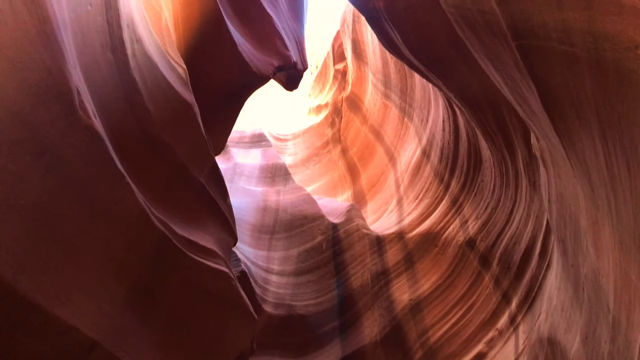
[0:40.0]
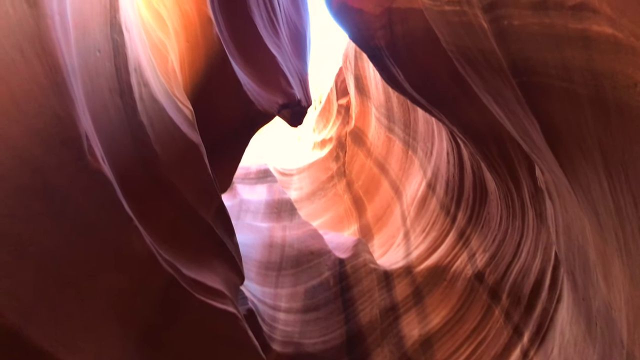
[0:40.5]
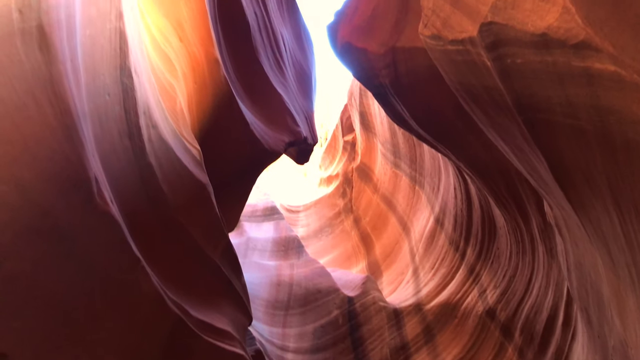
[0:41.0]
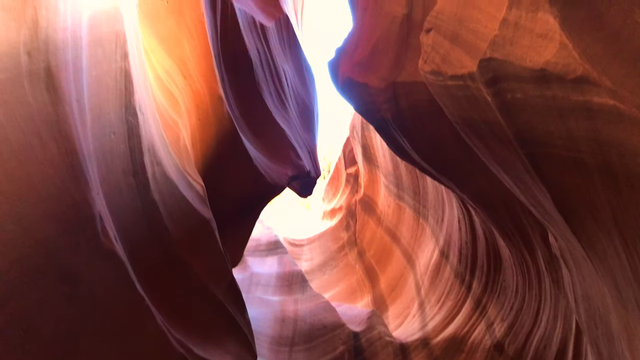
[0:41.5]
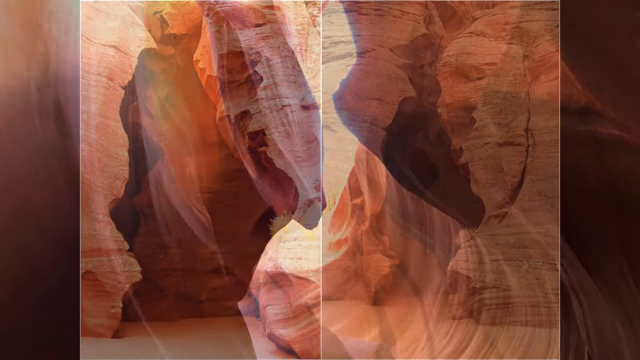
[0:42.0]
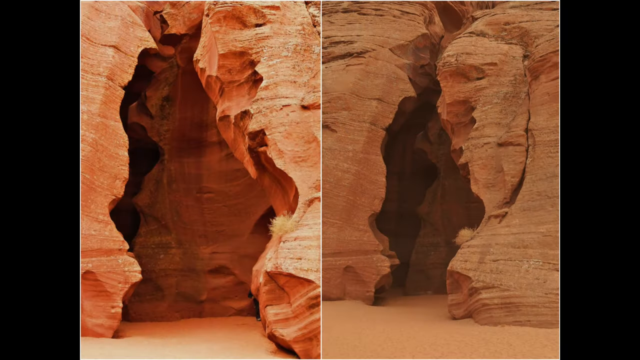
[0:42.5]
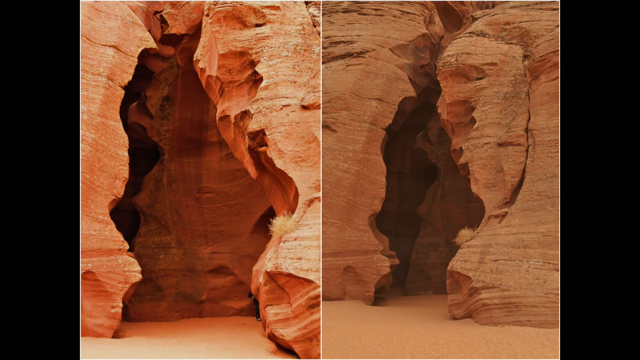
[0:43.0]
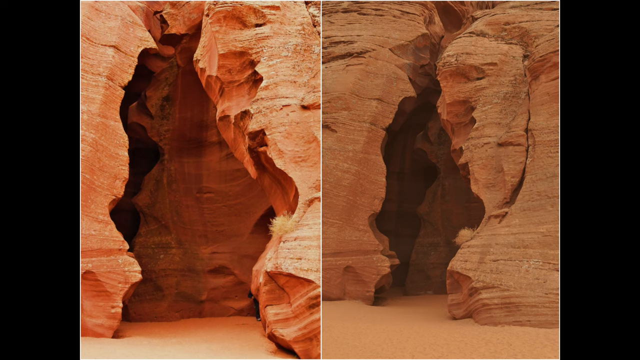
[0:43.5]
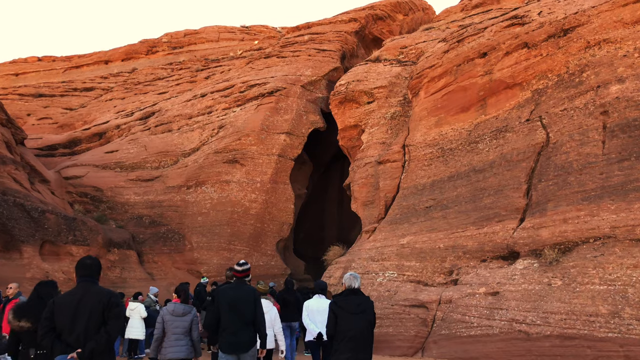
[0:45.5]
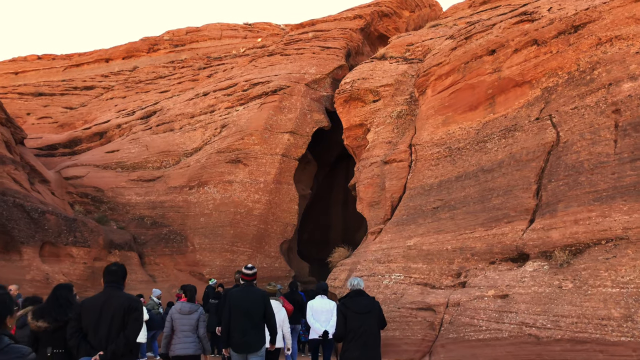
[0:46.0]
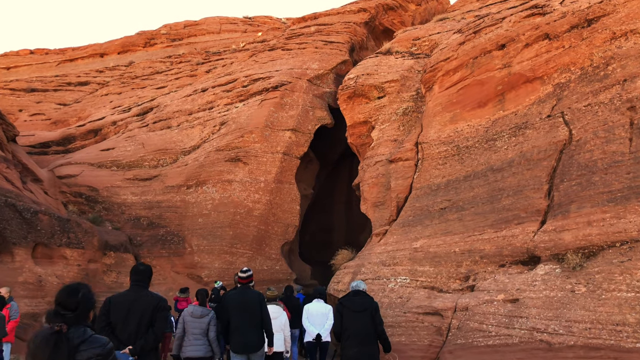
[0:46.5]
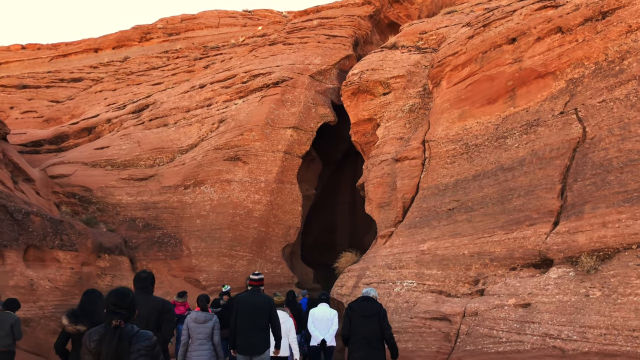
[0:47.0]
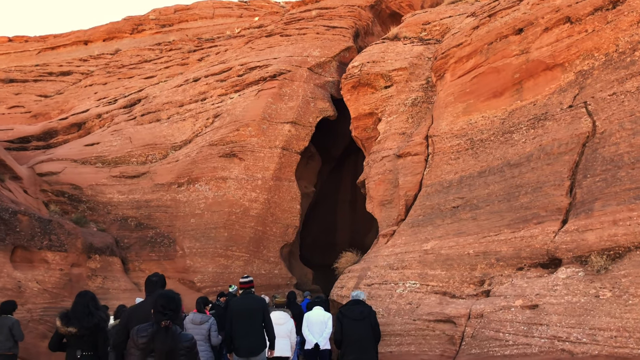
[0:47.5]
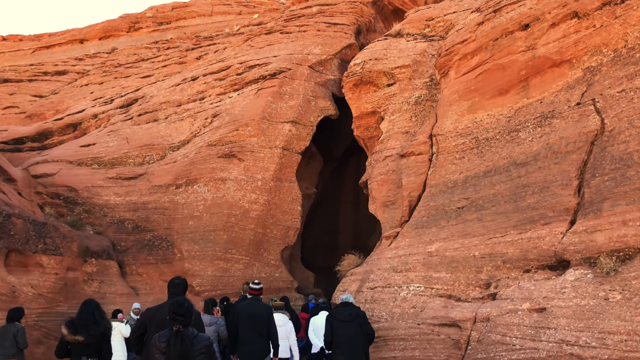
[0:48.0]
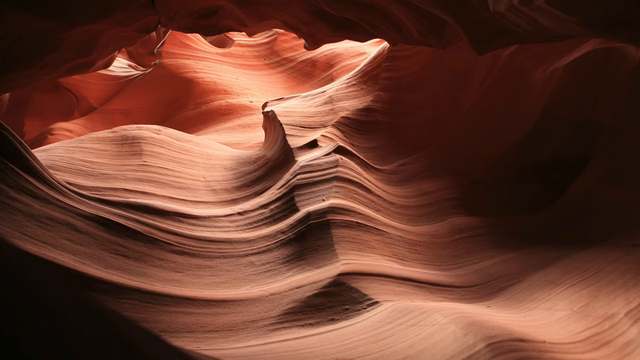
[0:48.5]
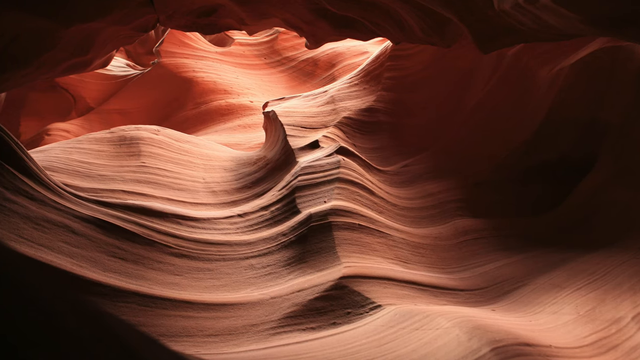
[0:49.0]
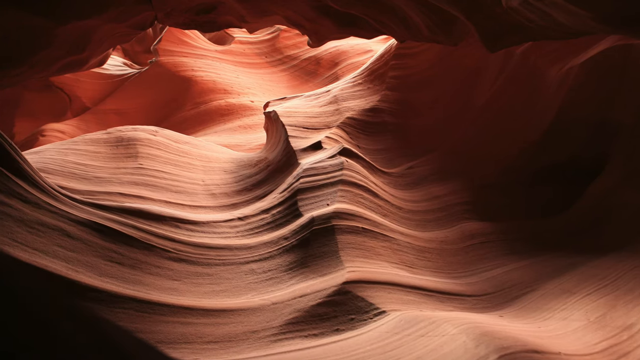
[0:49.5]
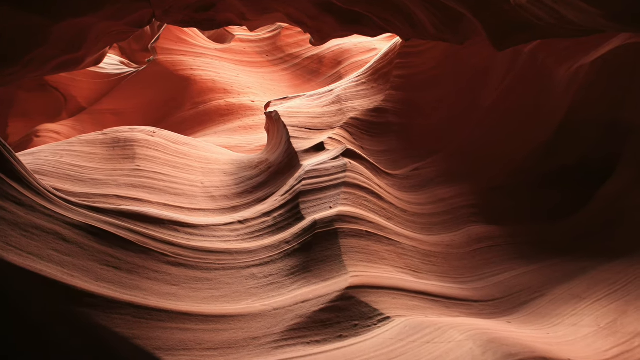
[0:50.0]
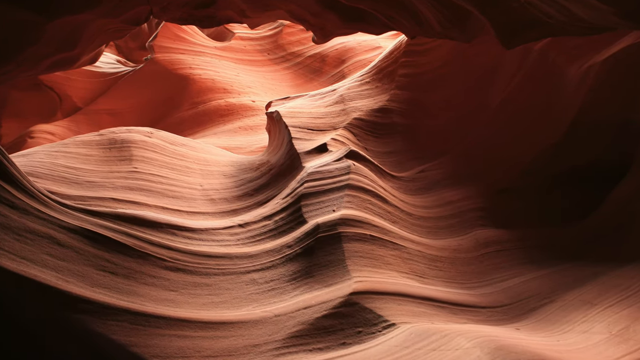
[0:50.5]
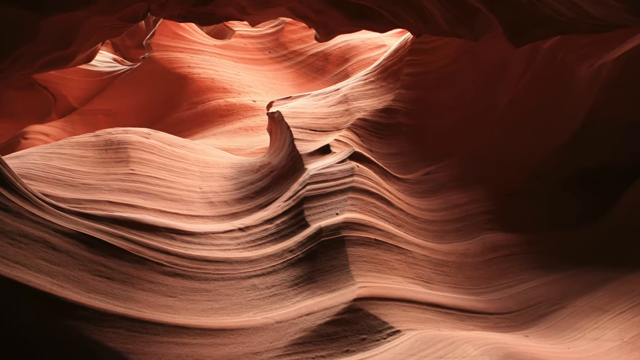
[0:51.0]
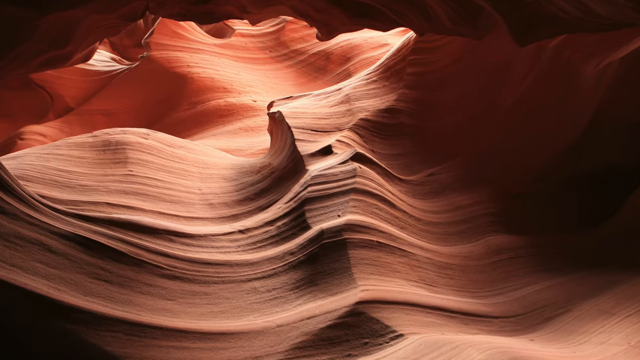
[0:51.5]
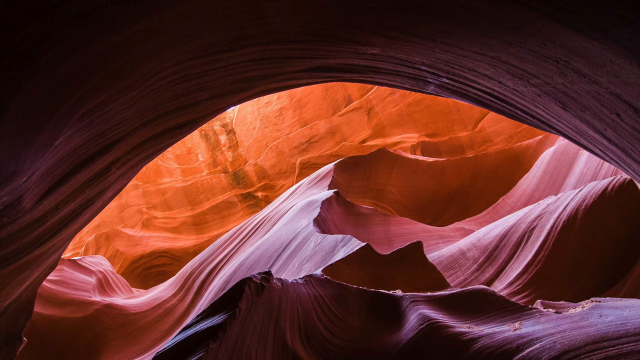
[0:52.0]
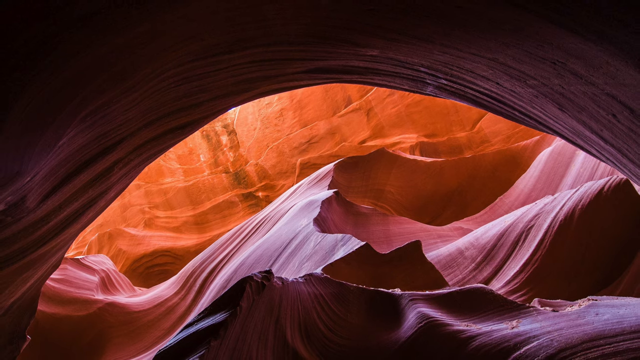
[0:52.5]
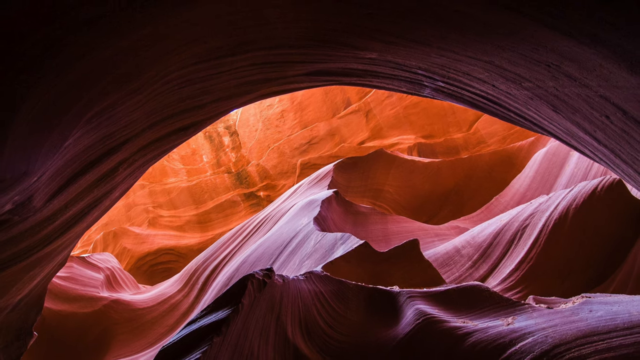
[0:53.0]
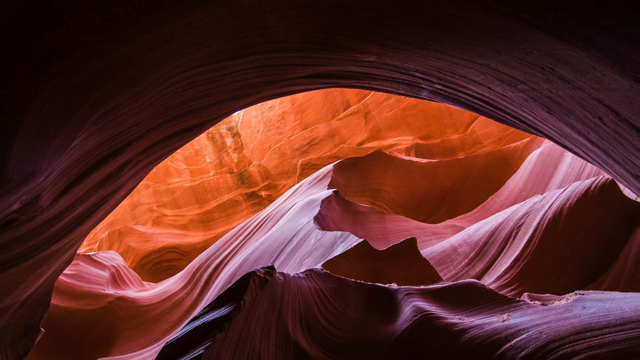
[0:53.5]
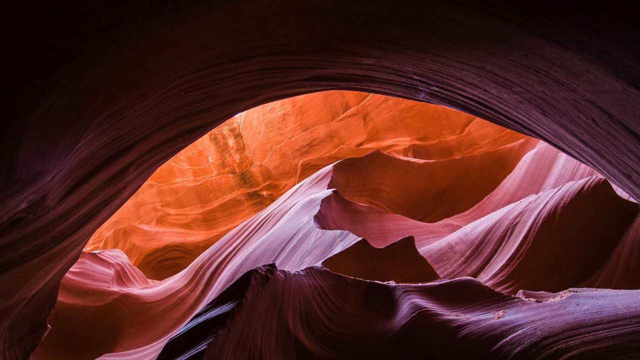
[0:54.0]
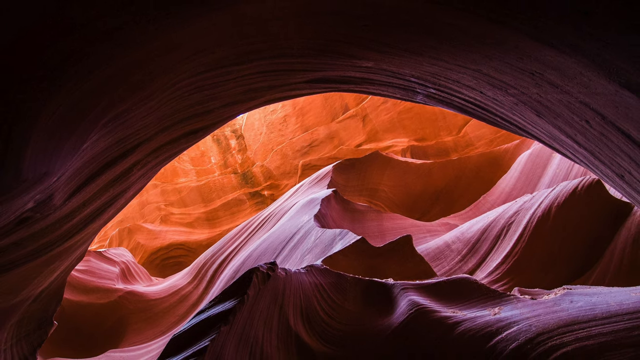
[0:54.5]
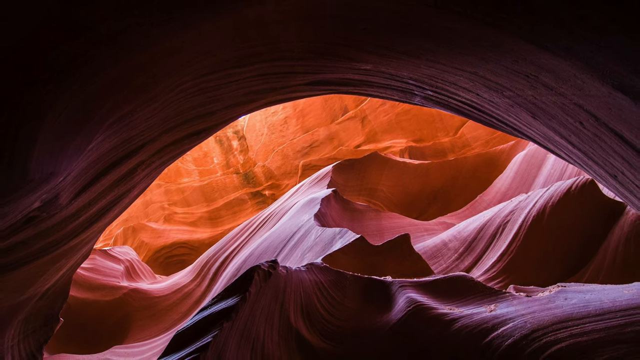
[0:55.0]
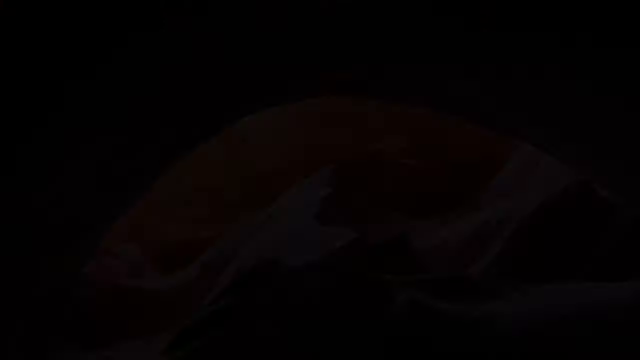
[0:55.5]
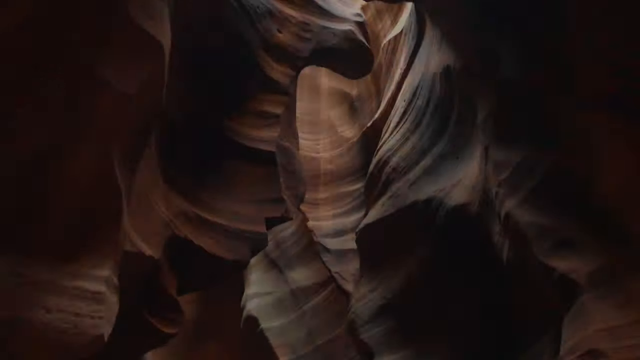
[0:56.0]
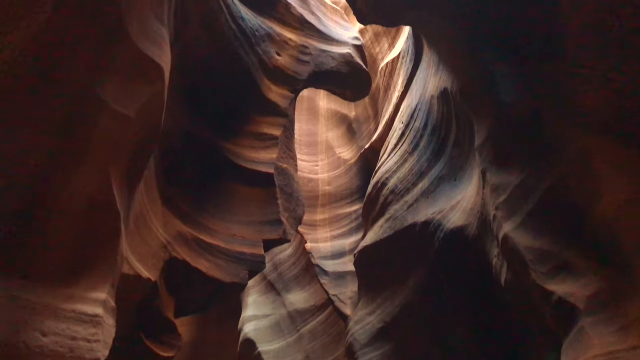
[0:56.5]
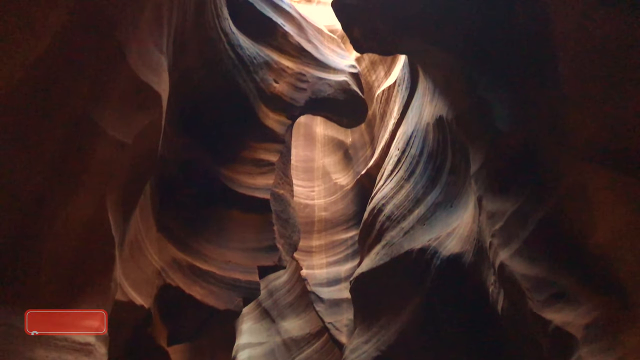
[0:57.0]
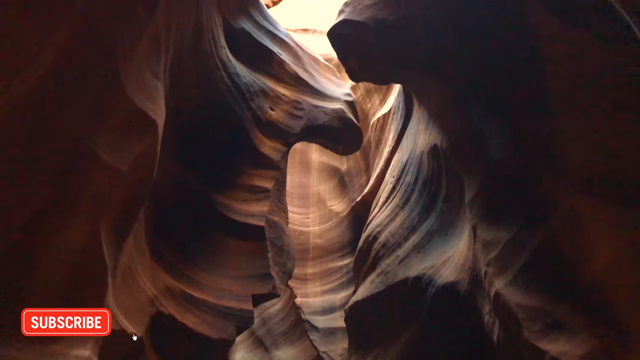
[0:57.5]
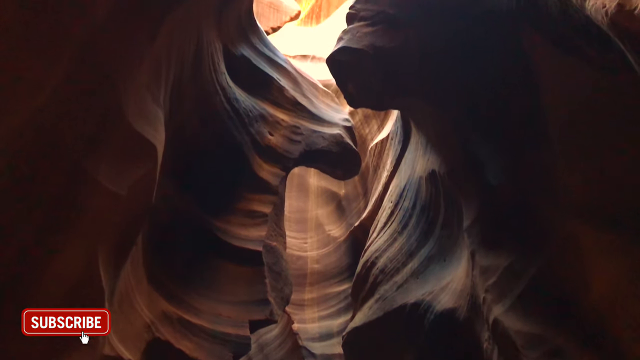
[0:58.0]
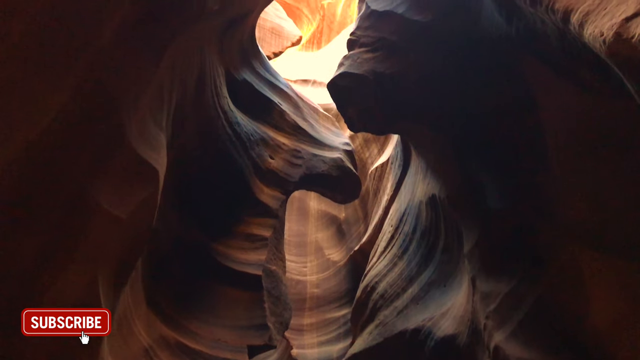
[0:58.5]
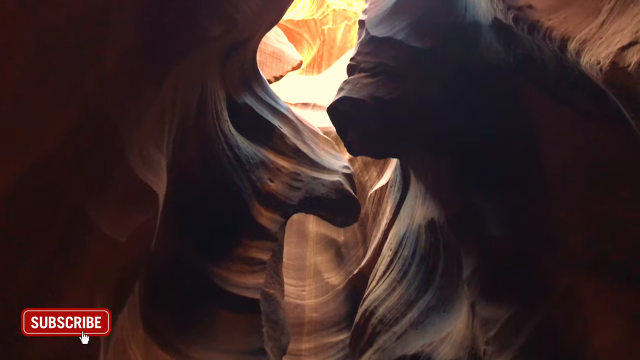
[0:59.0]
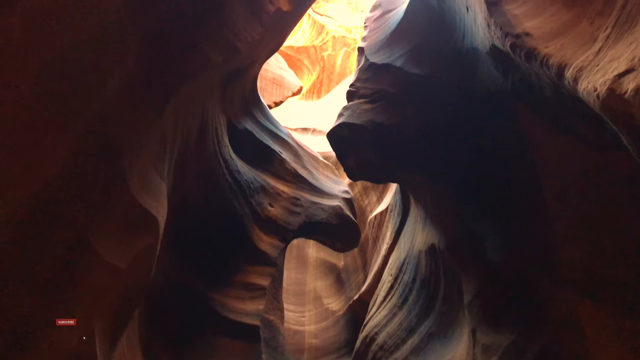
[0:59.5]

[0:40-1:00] An image from inside the cave looks toward the outside as bright light enters. The shapes are well curved and seem to have formed through a long natural process. On a map, two images appear: the one on the right forms the shape of a person, and the one on the left forms a groove that links up to the cave. A group of around 200 people in different clothes enters the cave. In the first group, one person wears a striped hat and a black coat, another wears a black coat, another a white coat, and another a black coat and has white hair; one wears a blue shirt and another white trousers. One person squeezes past another through a space where the sky is visible. The sky is white above the cave, the rock and an opening.